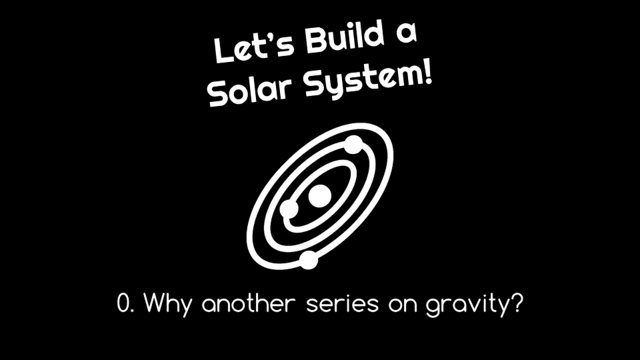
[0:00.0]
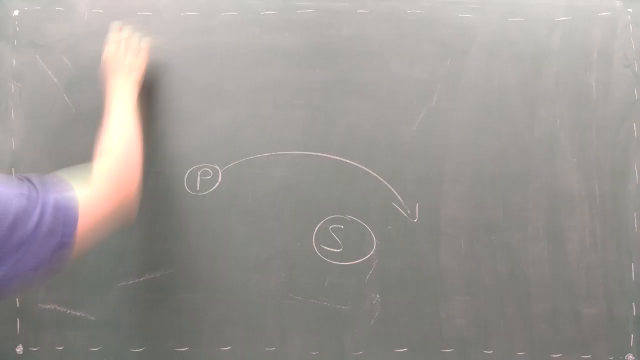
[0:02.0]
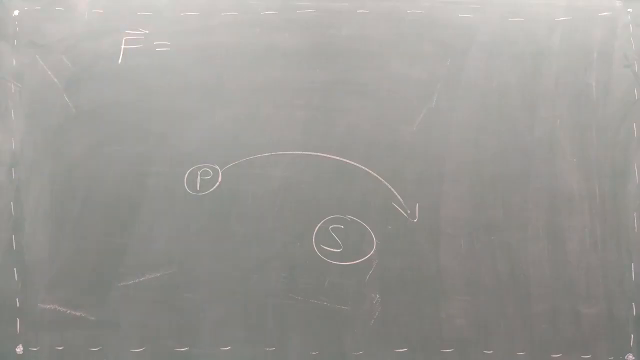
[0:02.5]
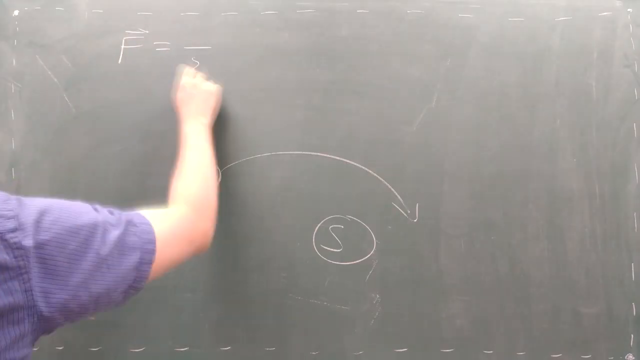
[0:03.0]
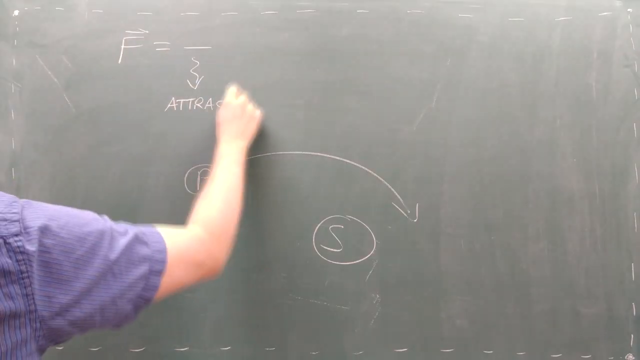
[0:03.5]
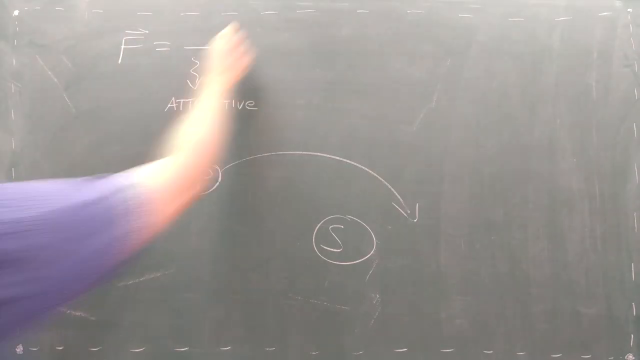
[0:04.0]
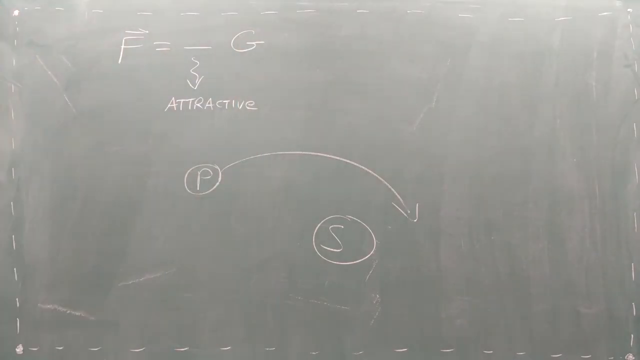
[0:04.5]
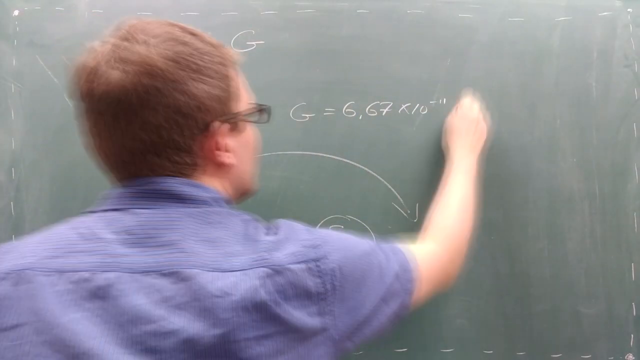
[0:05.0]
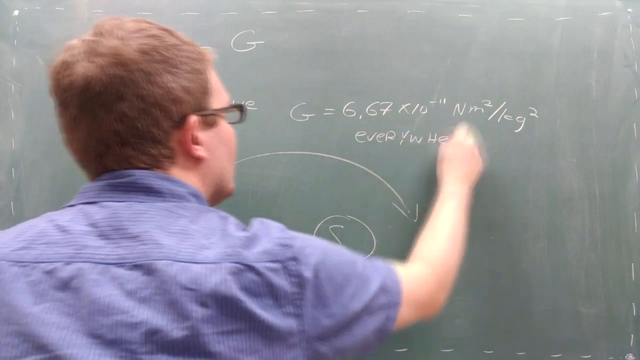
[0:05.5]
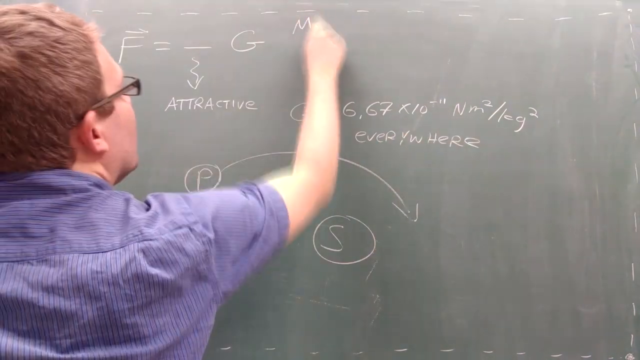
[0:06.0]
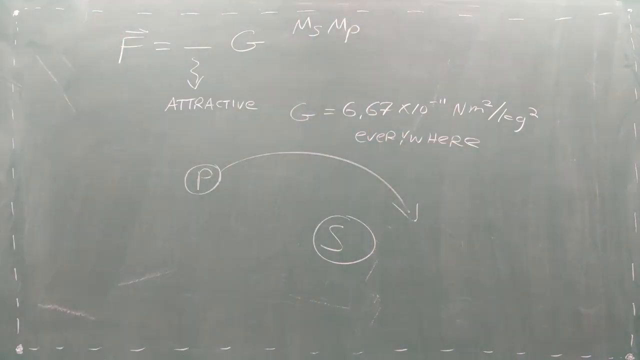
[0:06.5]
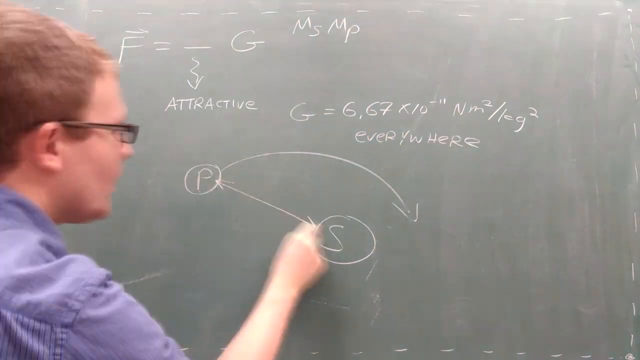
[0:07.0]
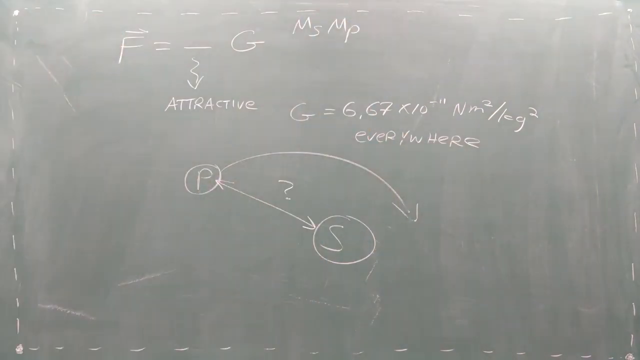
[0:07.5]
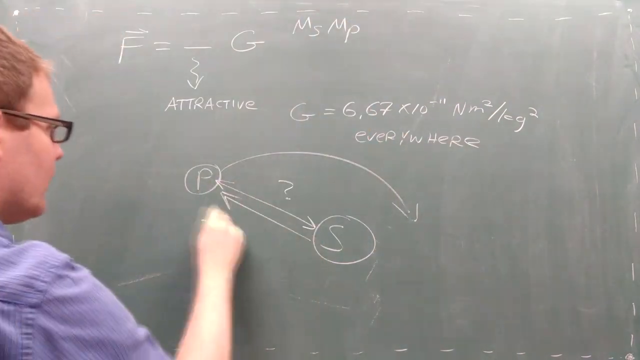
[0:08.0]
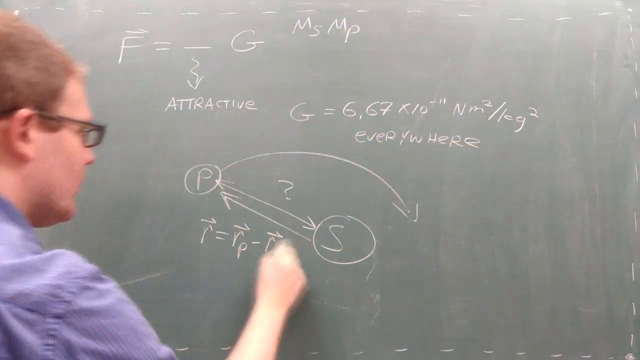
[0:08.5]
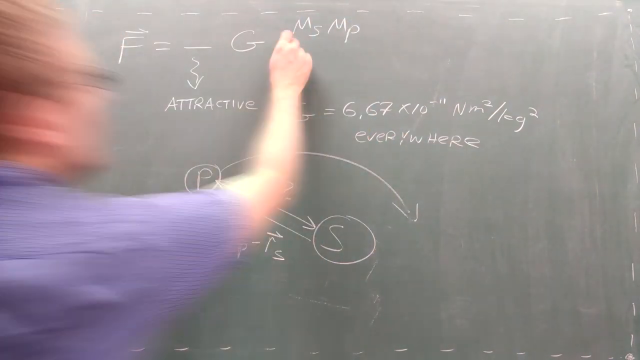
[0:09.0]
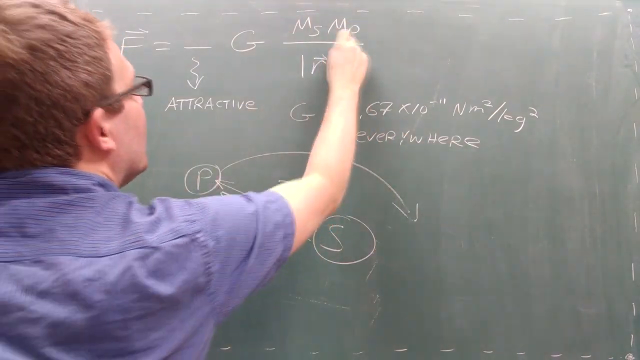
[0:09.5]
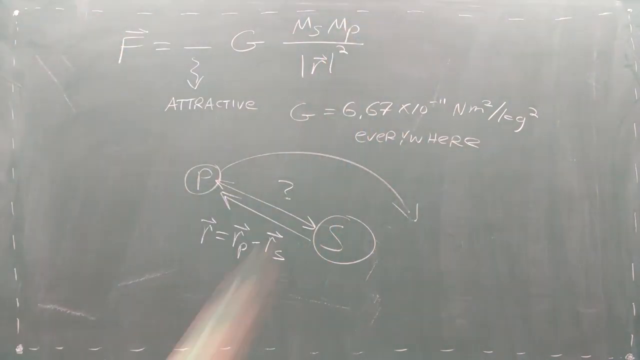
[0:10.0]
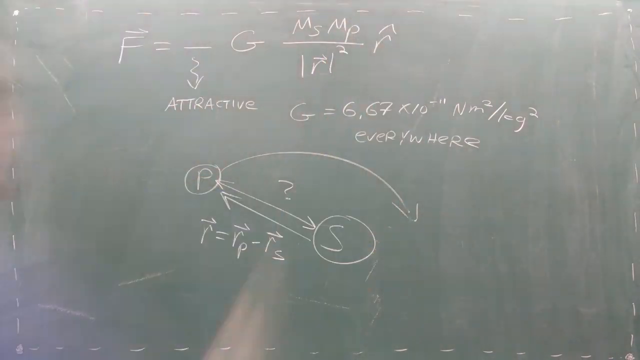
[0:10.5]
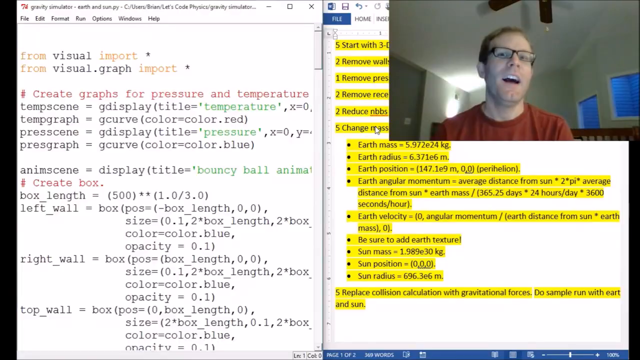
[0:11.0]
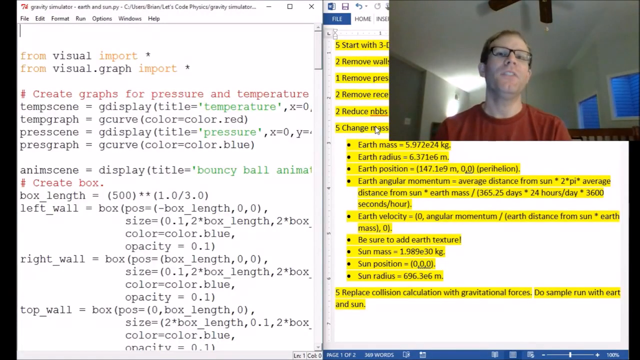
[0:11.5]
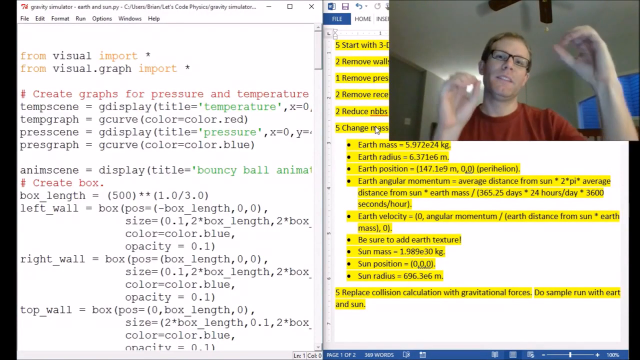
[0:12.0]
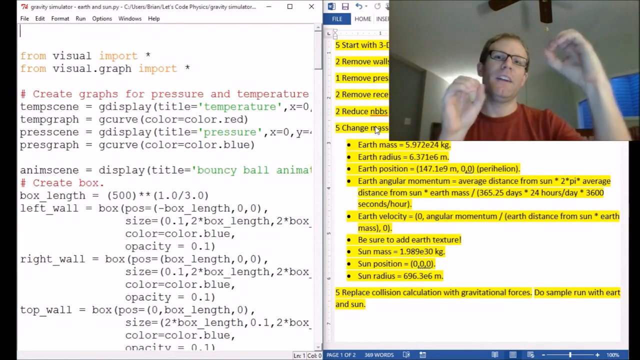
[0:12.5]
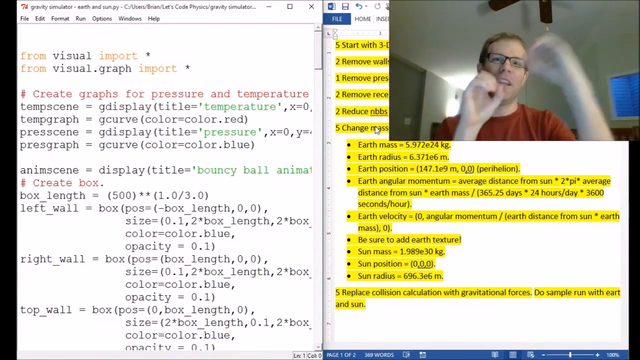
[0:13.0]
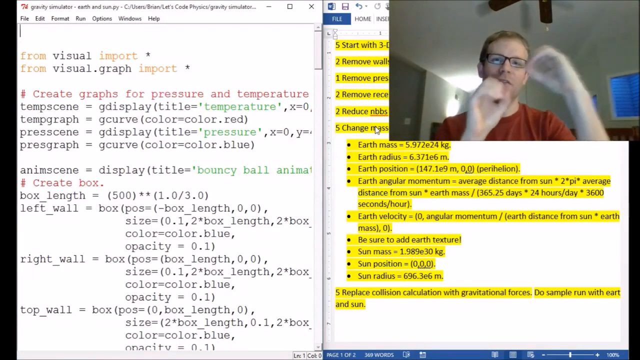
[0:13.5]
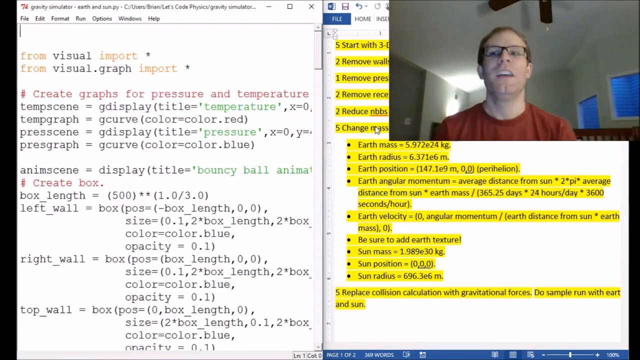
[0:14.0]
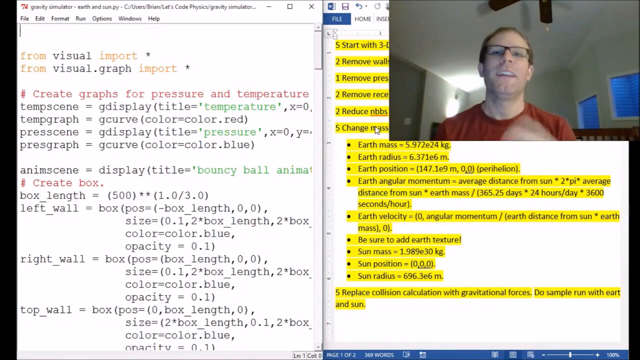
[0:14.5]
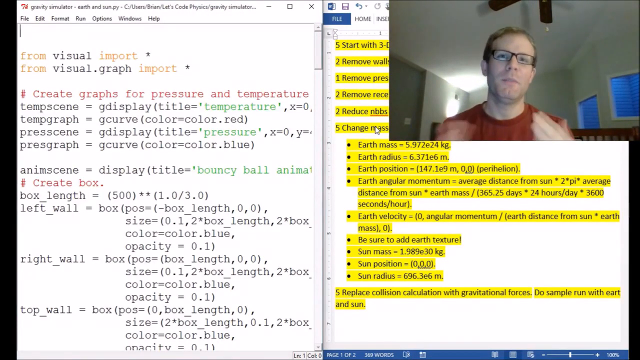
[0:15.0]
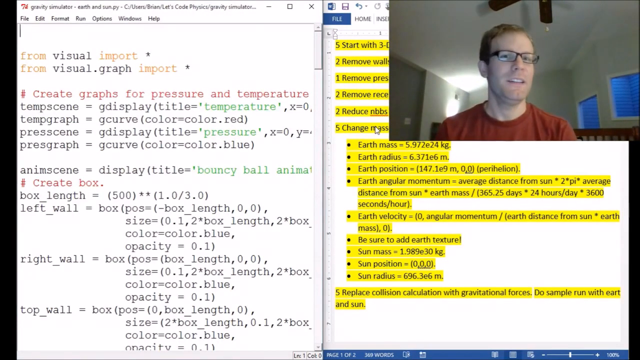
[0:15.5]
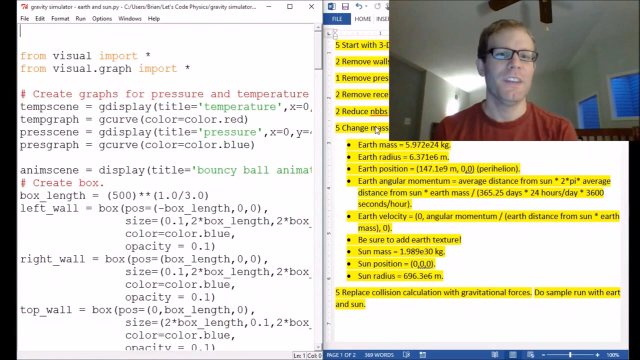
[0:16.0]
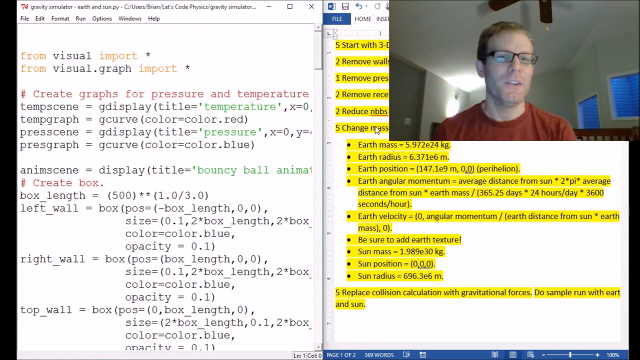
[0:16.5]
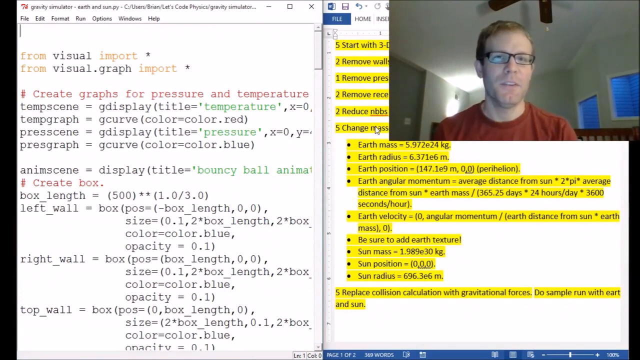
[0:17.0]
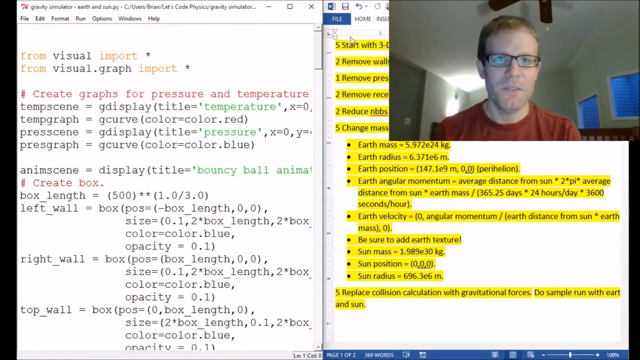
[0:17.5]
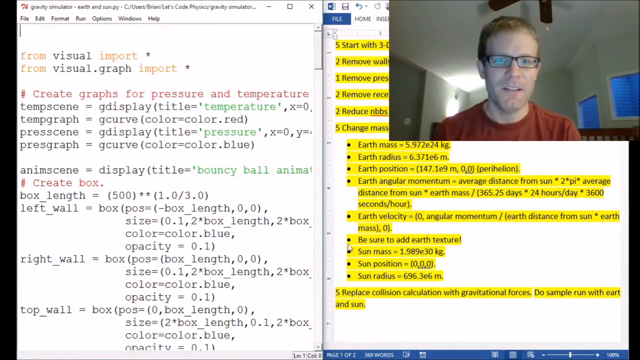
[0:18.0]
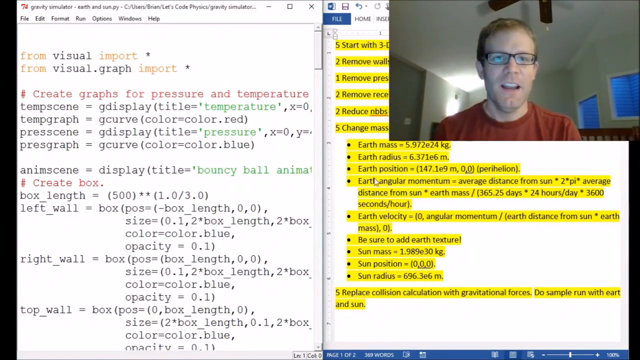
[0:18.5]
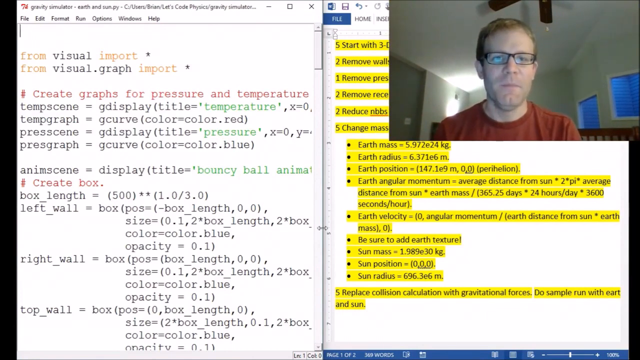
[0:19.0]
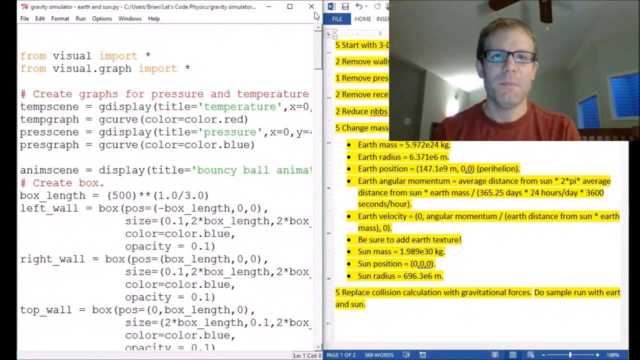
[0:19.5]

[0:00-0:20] The text "let's build a solar system" appears. A Caucasian man with glasses, wearing a blue short-sleeved shirt, writes information on a board. He writes an equation beginning "f = negative g", with a squiggly line going down to an arrow labeled "attract". Another equation begins "g = 6,67 times 10 minus 11". He draws a letter p with an arrow, circled, and the letter s below it, also circled. Next to the equation "f = minus g" he writes m s m p, then draws two arrows going back and forth between the circled p and the circled s. He then starts another equation beginning with r.